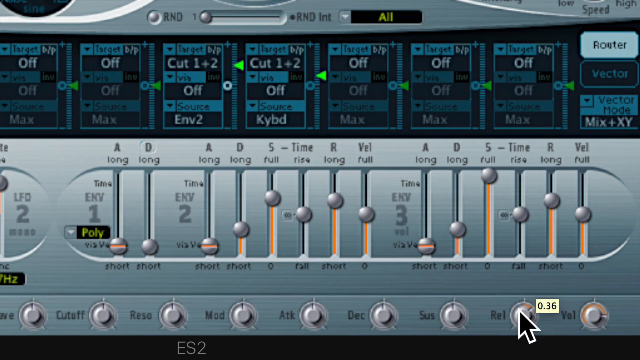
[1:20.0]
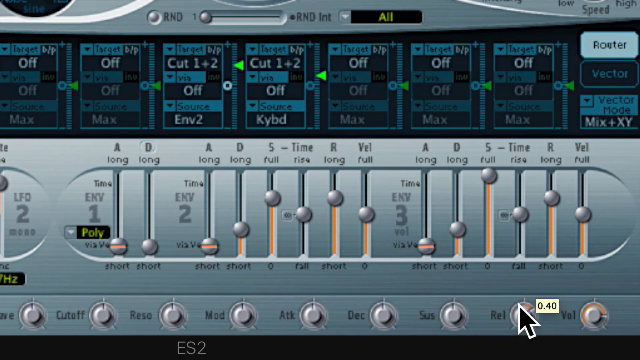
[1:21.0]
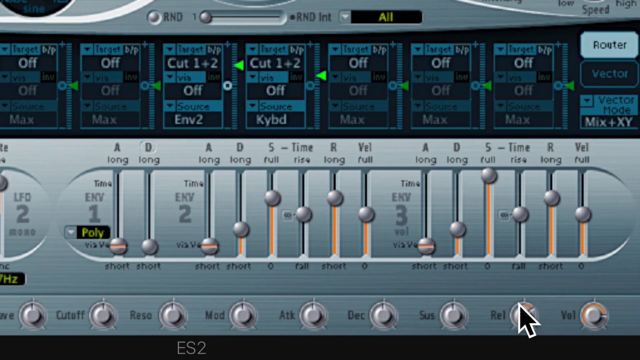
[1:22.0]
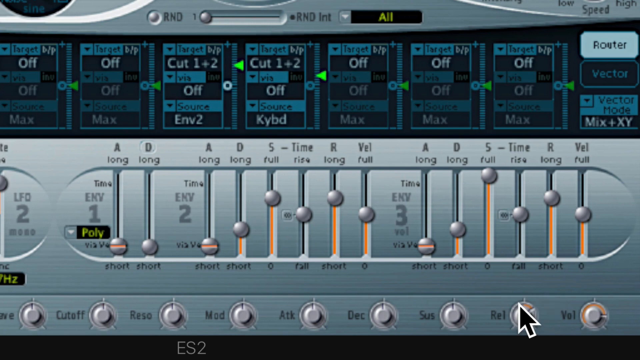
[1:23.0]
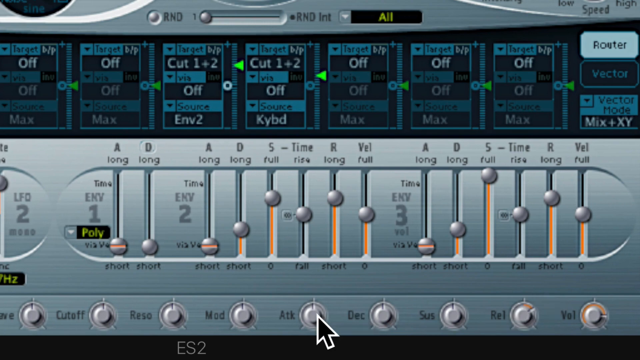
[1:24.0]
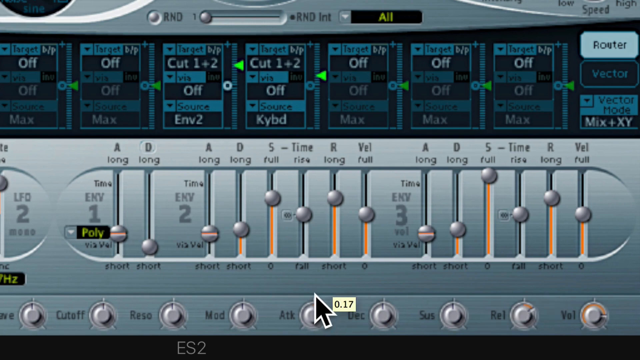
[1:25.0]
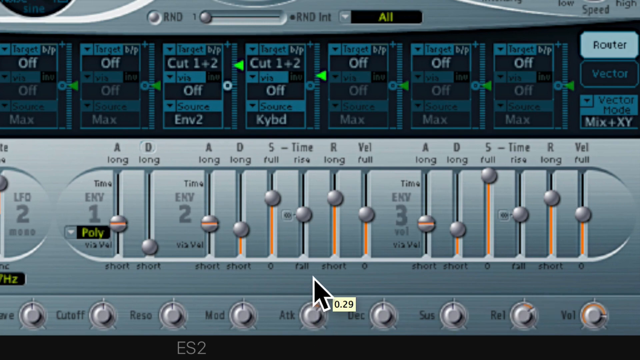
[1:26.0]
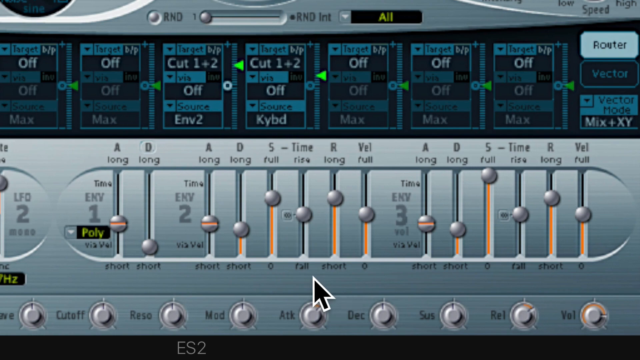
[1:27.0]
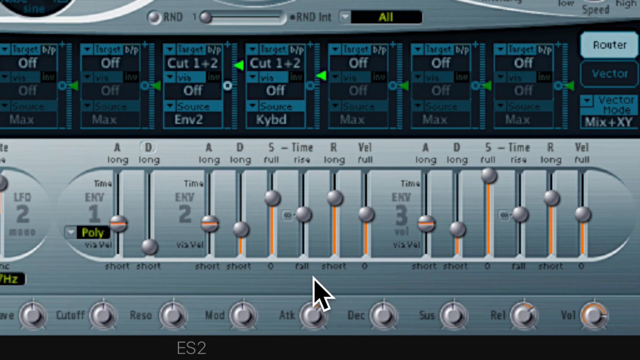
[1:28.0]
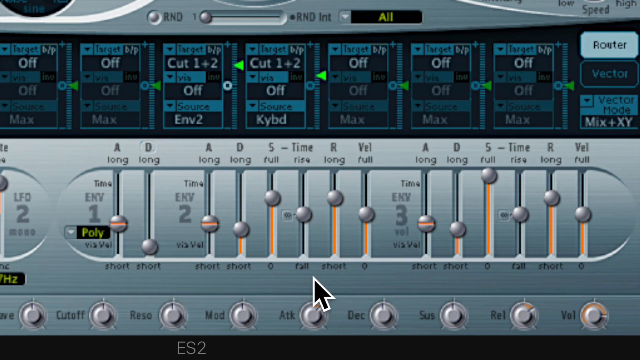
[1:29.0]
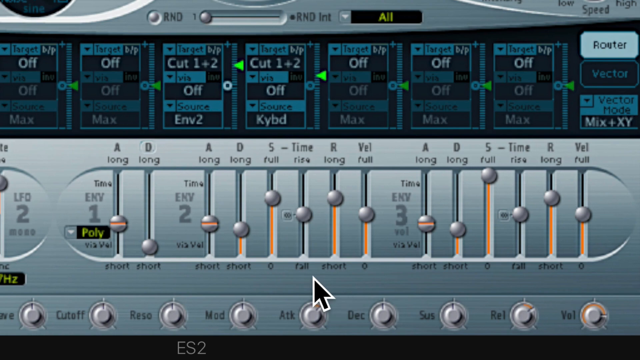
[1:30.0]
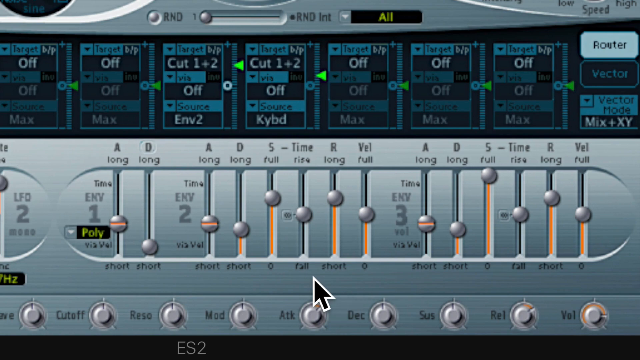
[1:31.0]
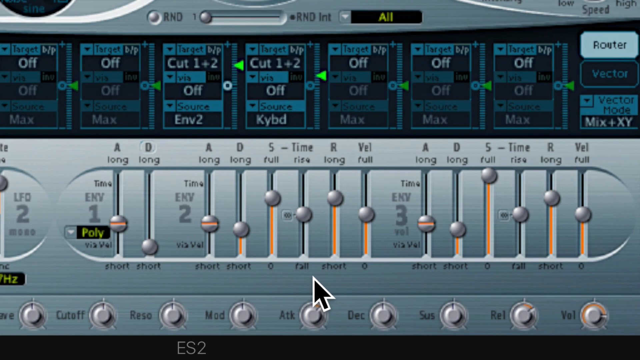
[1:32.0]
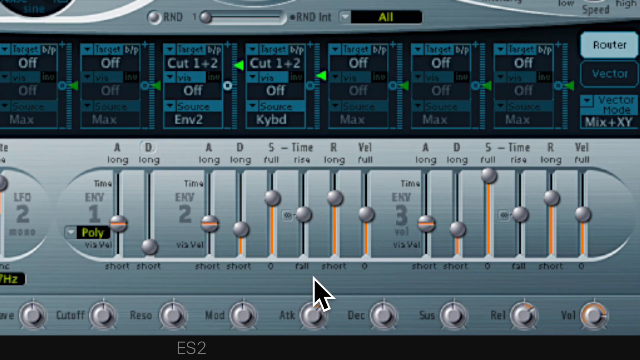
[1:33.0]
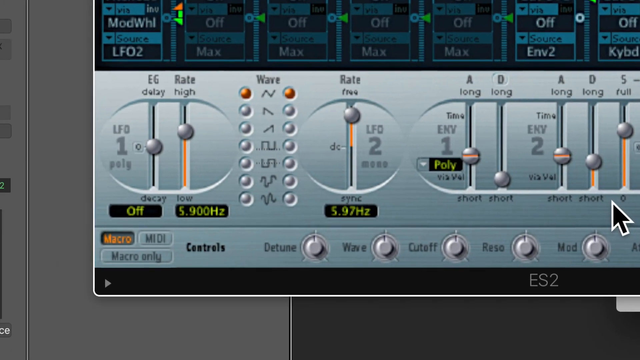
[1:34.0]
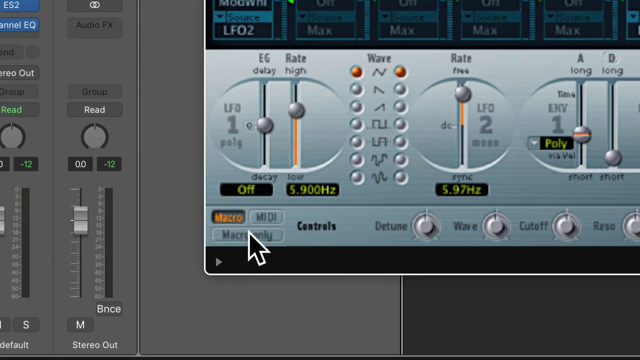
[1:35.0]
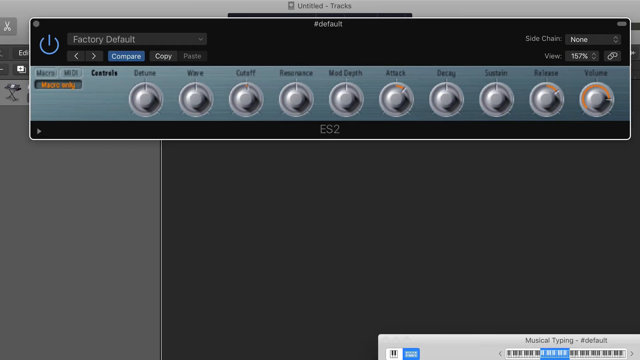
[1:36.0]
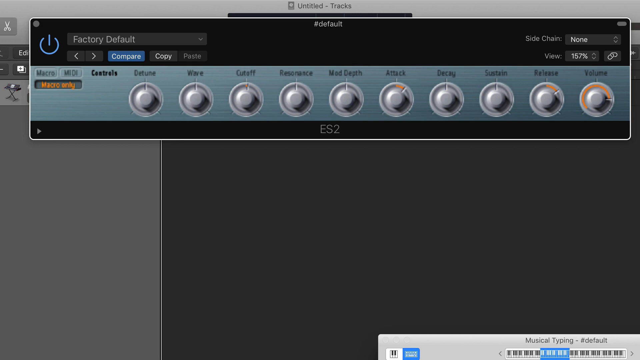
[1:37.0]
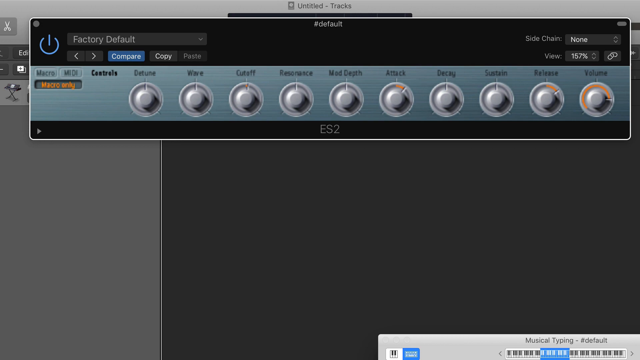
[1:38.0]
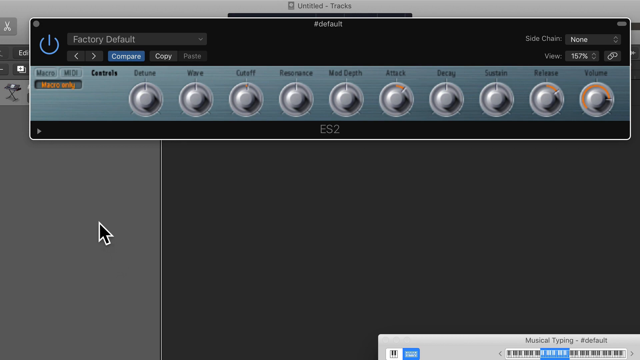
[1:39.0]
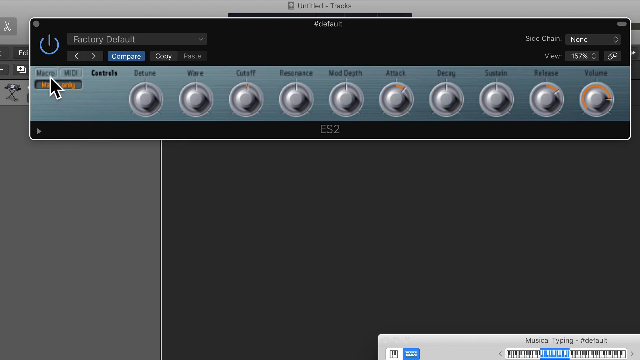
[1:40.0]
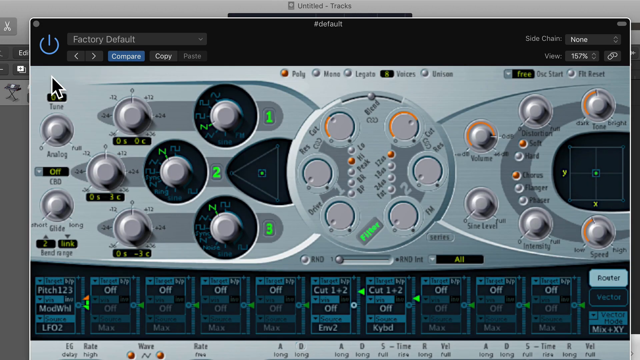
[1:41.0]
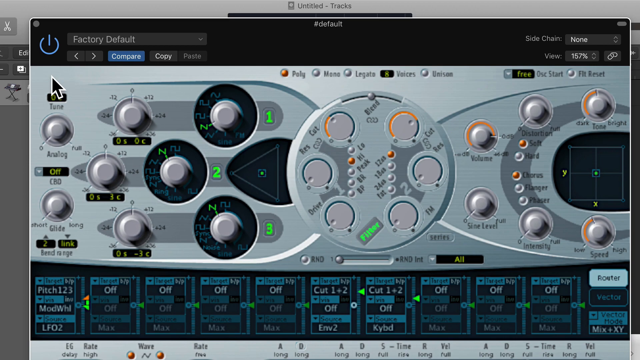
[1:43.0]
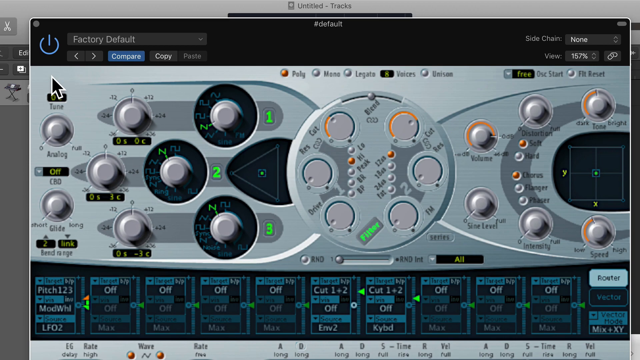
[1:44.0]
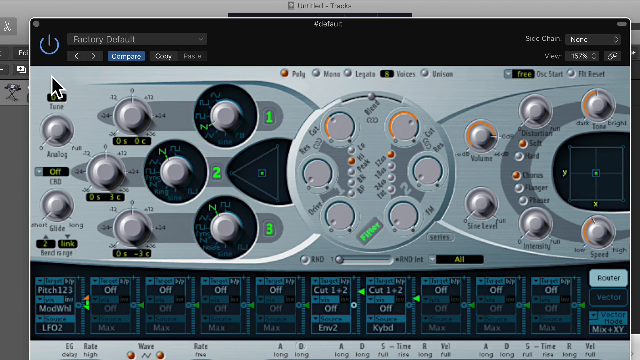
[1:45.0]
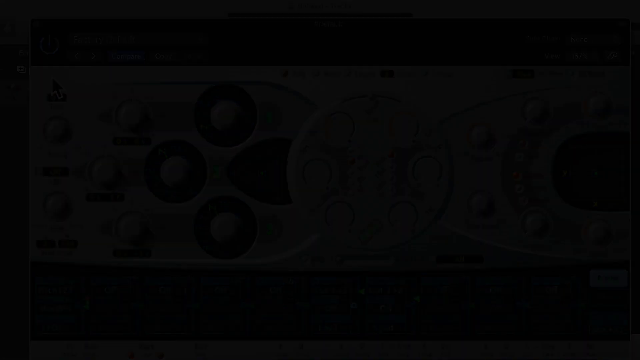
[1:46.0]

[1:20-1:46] The user continues adjusting the REL knob, which also increases the values of other equalizers in the interface, the R and R keys, which both increase to a longer equalization. The user hovers over both of them as if drawing attention to them while giving a tutorial. They increase the REL knob further to 0.40. They then go to the middle of the interface and increase a knob titled "ATK" to 0.29, which affects the A keys on the virtual piano. After a brief pause, the video pans to the left of the interface, showing that the interface can be compacted to only several knobs rather than the tens of equalizer options. The program also appears to be titled "ES2". The interface is then decompacted, showing the equalizer in its entirety, and the video slowly fades to black.